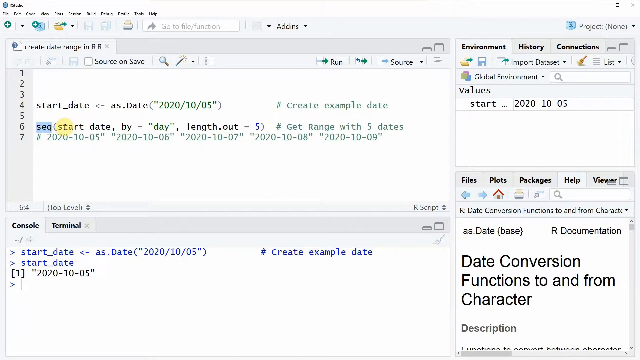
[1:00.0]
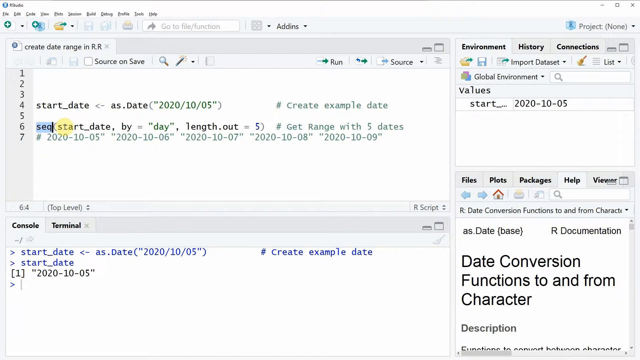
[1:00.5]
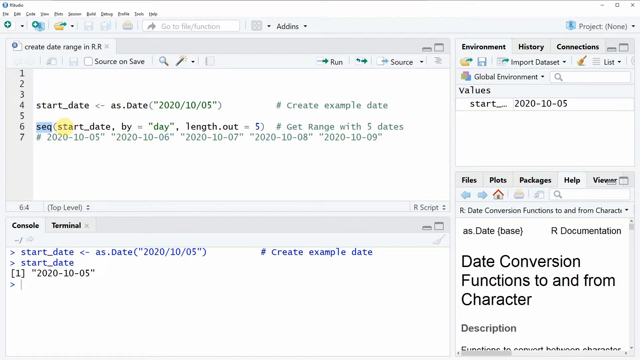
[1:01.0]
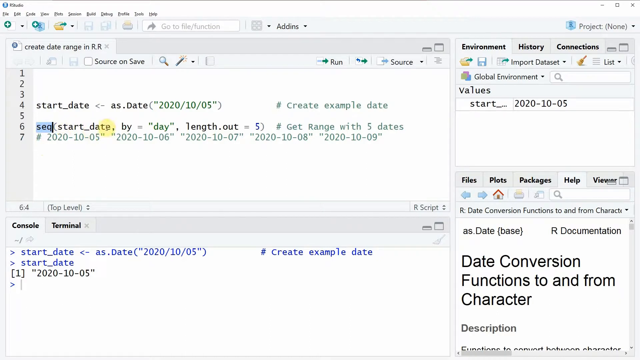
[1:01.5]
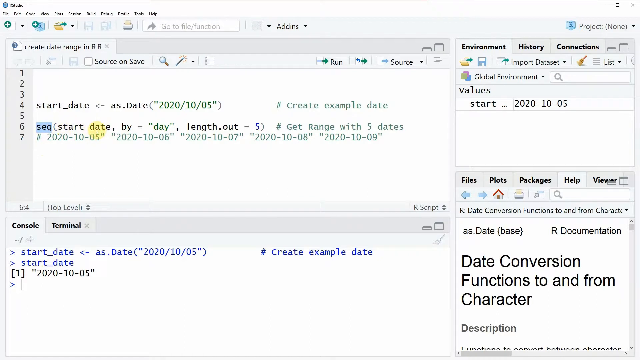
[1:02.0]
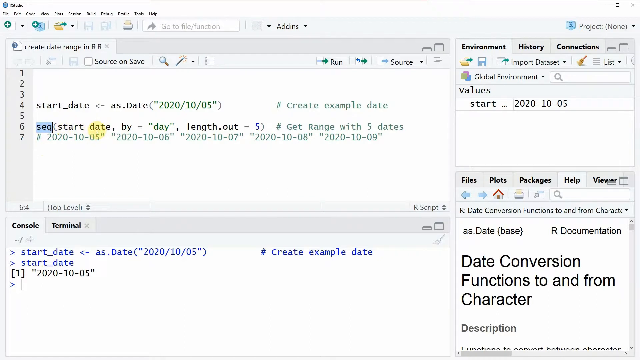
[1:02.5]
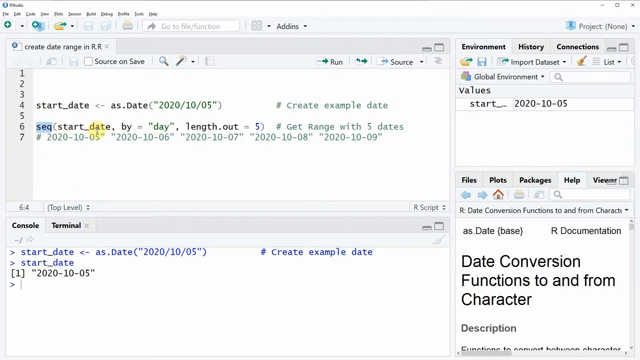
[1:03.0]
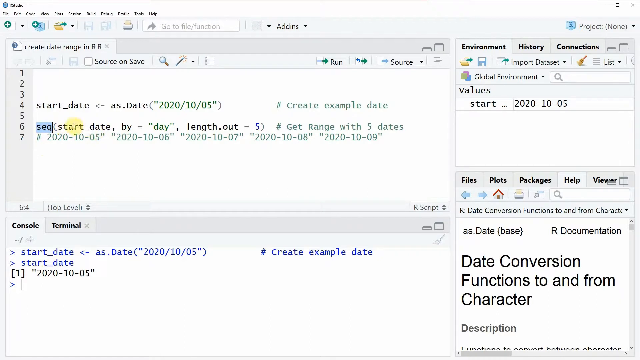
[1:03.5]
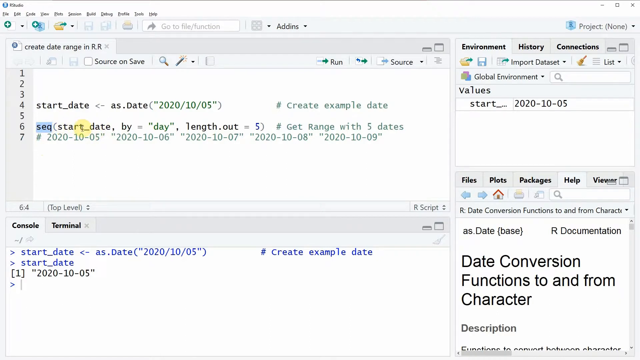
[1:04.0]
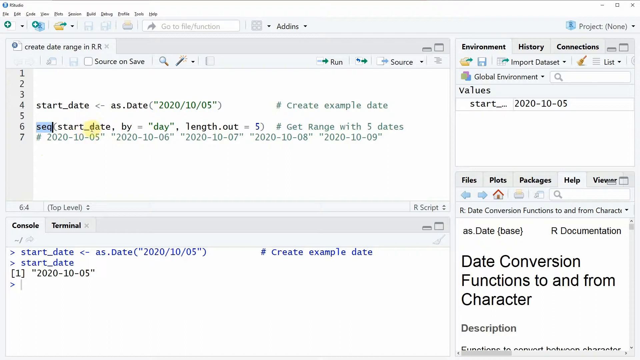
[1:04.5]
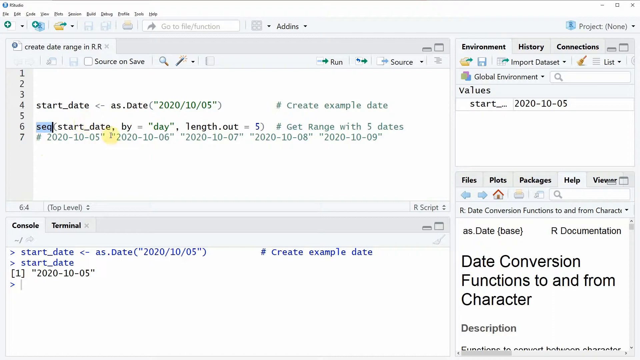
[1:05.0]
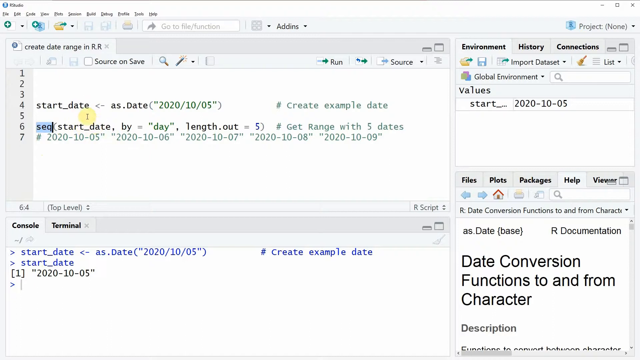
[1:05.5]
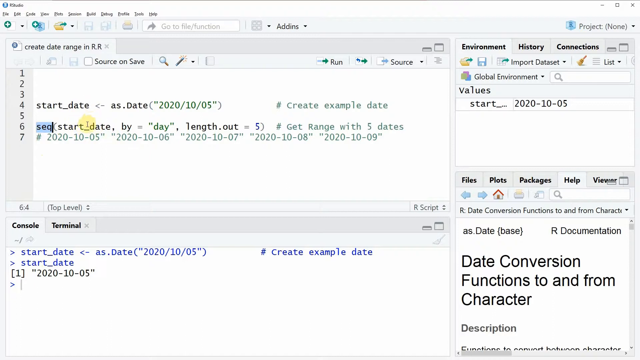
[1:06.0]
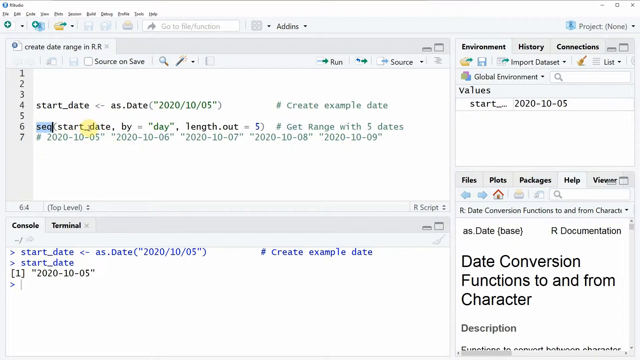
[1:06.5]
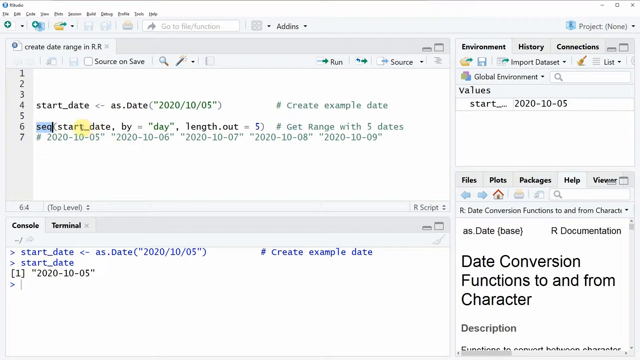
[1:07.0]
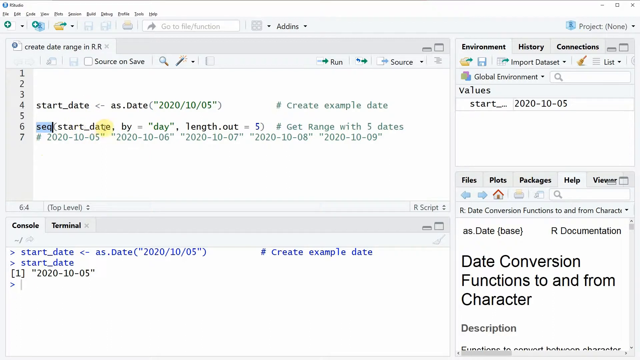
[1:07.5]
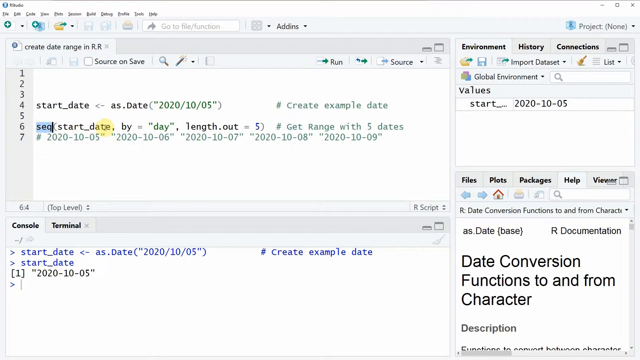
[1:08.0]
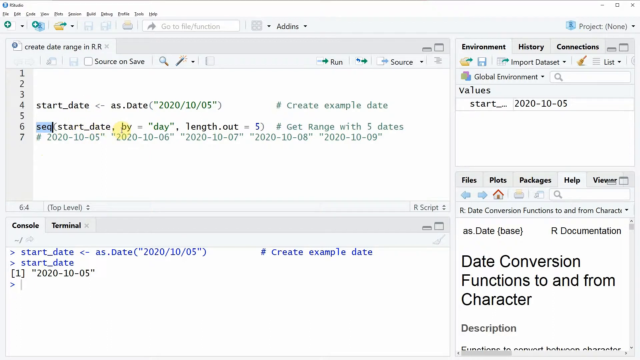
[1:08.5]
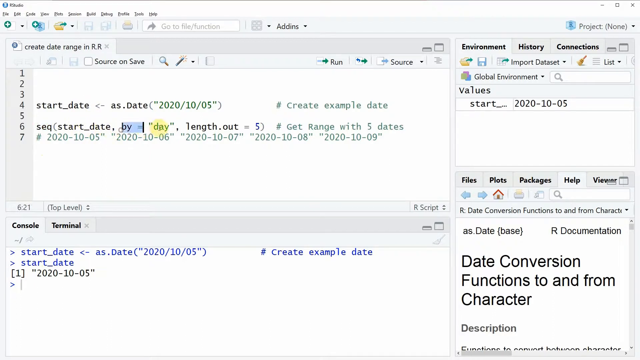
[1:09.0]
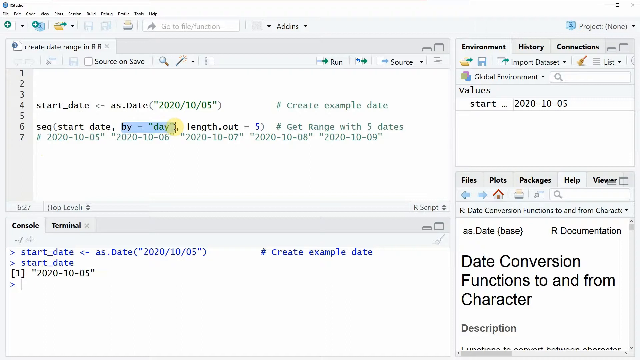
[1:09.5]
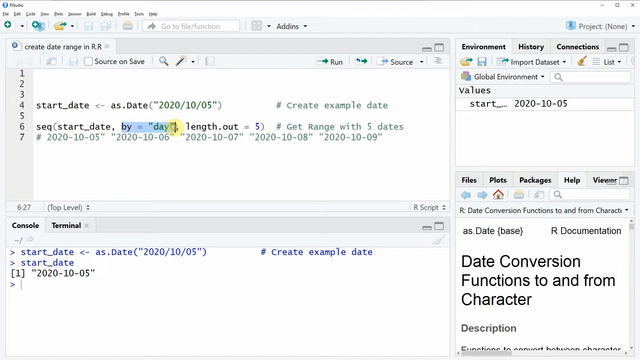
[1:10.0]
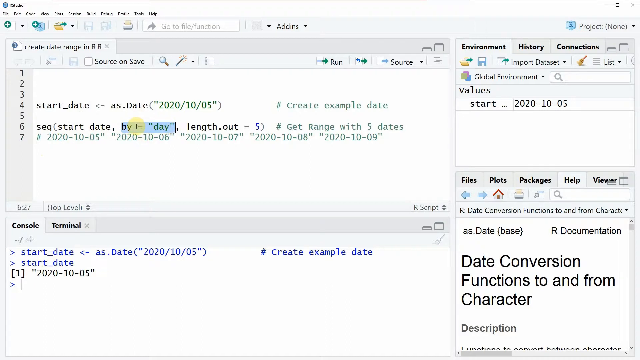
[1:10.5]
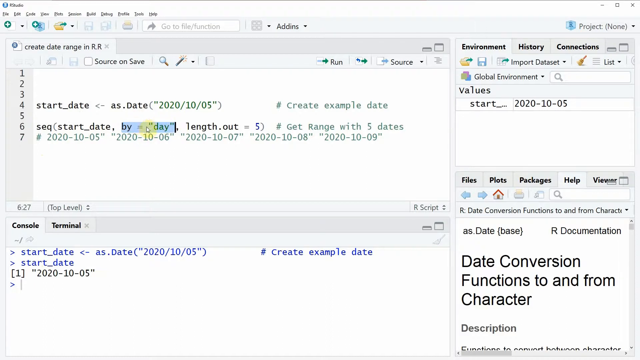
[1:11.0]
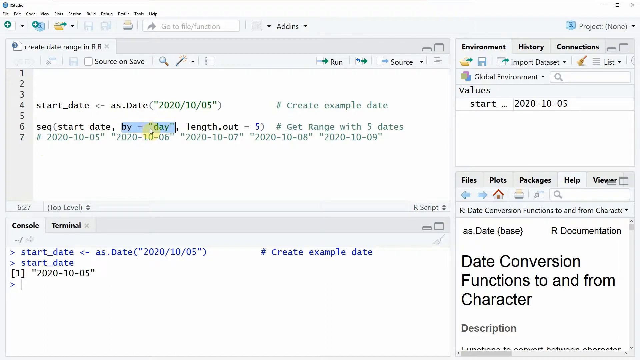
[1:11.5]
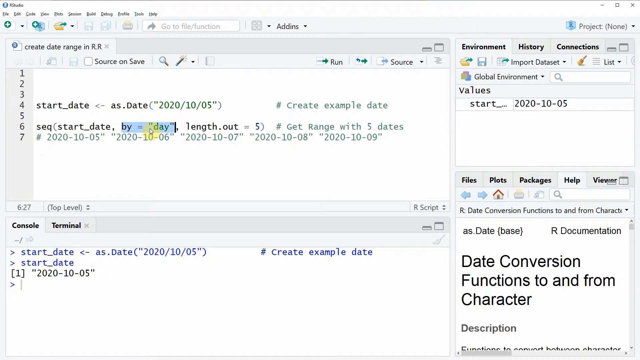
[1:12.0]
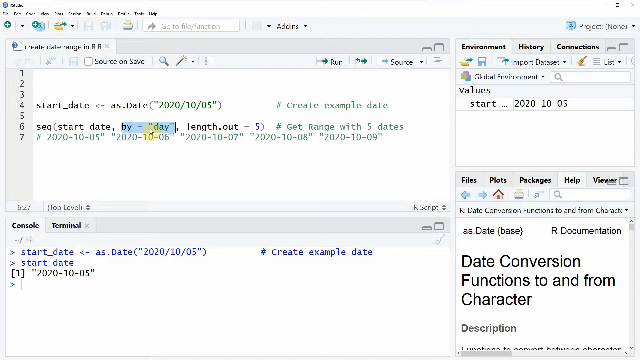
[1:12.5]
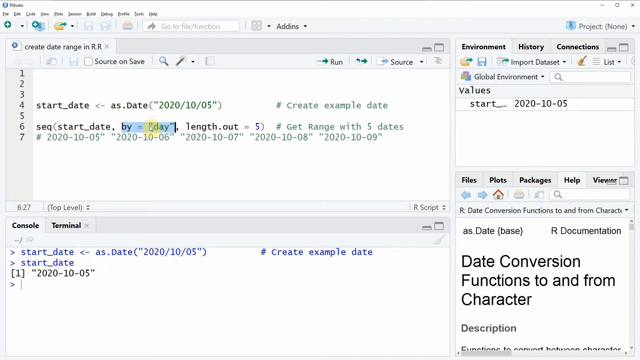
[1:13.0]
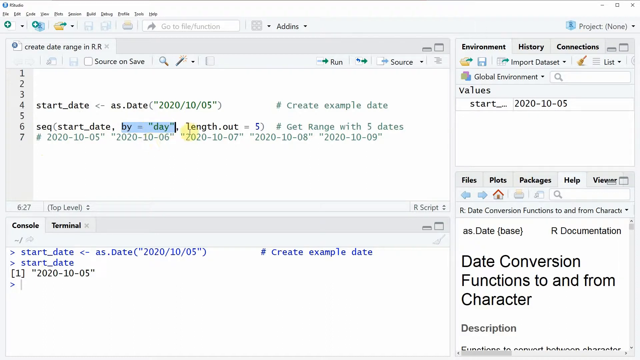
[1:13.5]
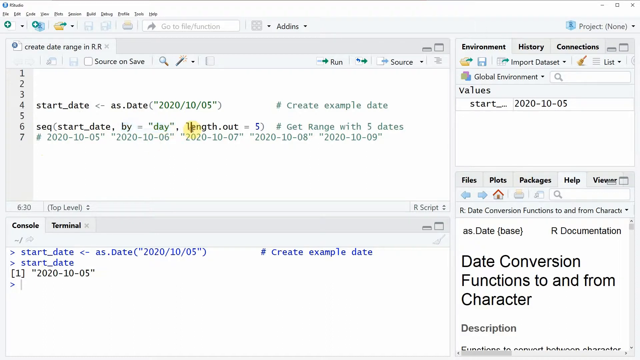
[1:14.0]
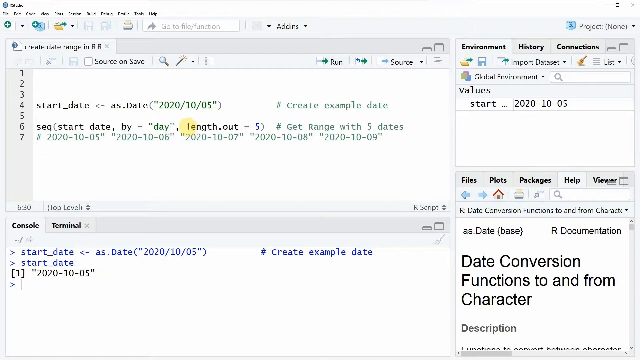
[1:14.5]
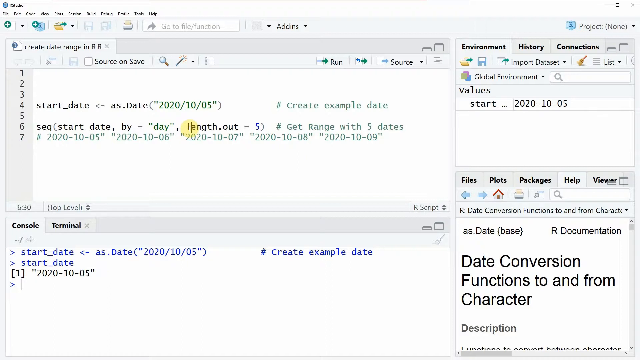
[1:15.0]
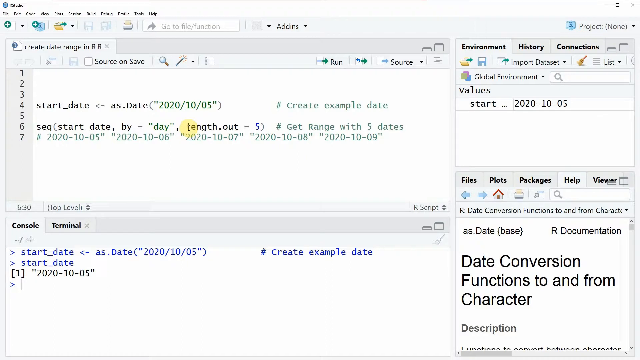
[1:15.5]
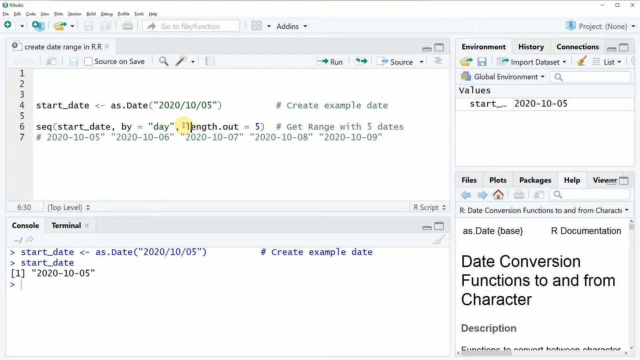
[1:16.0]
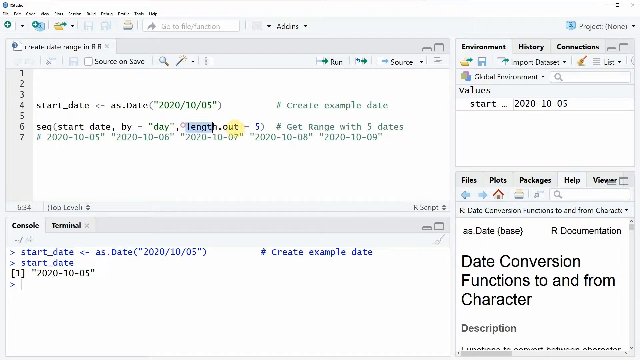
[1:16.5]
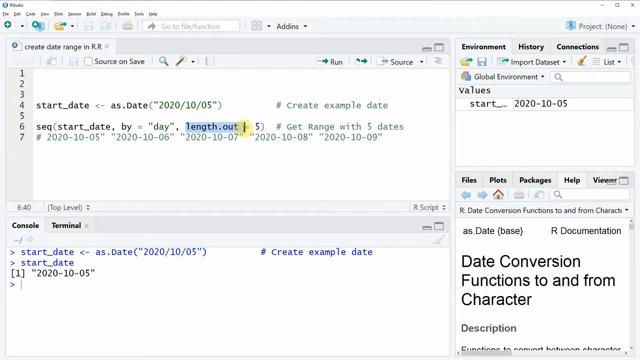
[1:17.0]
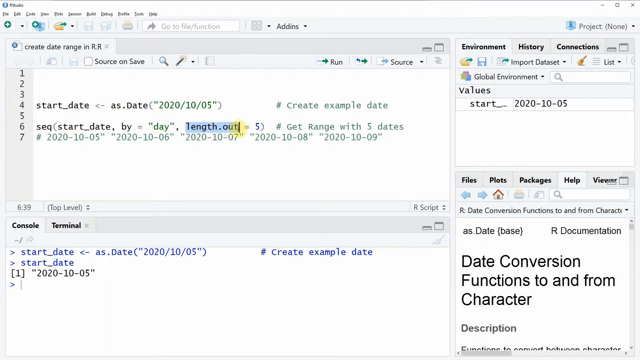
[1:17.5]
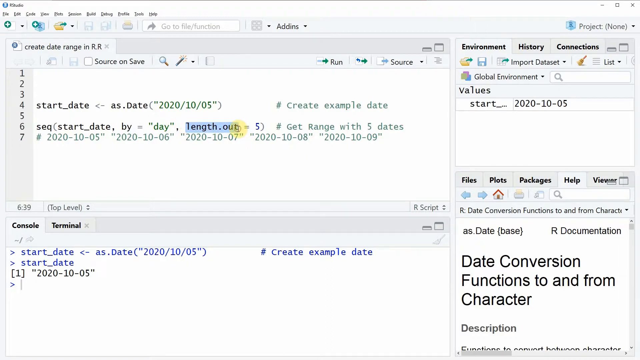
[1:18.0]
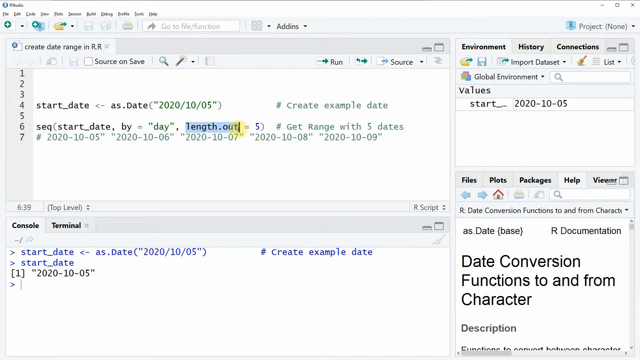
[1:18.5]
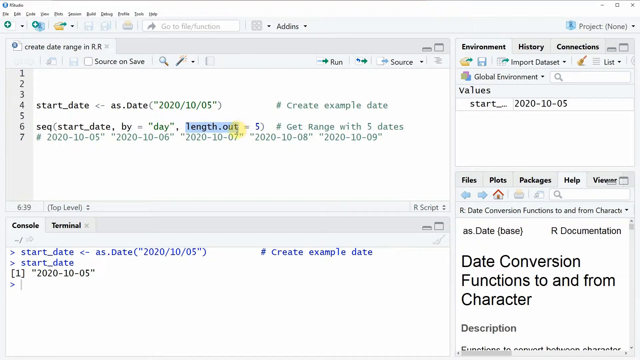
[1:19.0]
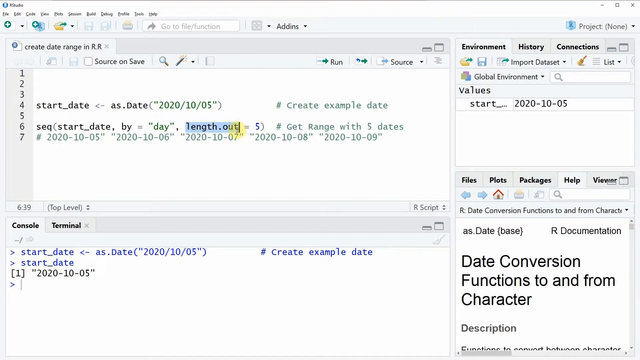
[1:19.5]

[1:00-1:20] Code on the left-hand side of the screen is arranged in separate areas with lines of different lengths. The right-hand side has text about "date of conversion", functions, and documentation.